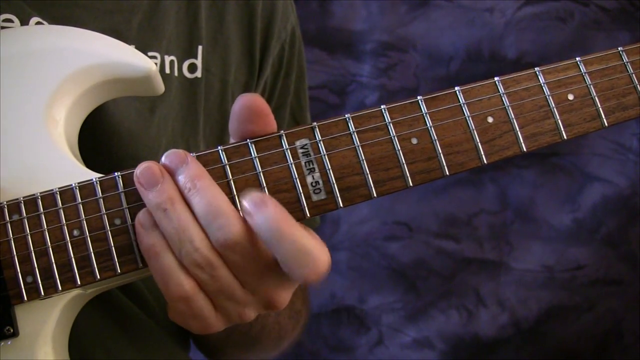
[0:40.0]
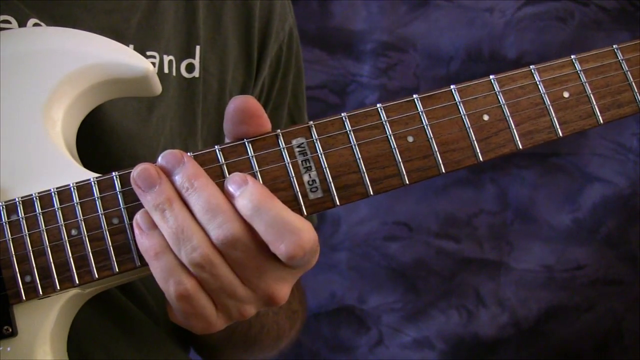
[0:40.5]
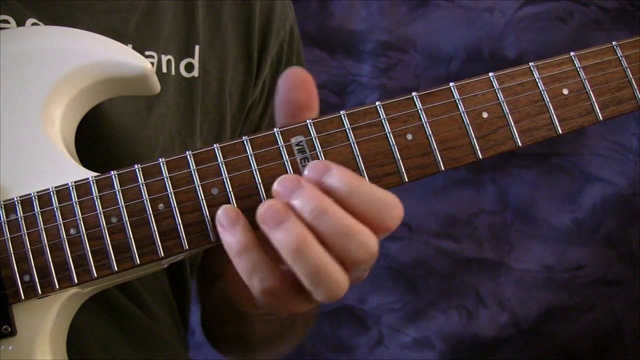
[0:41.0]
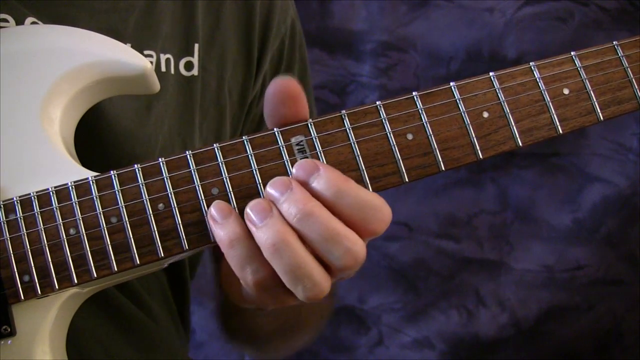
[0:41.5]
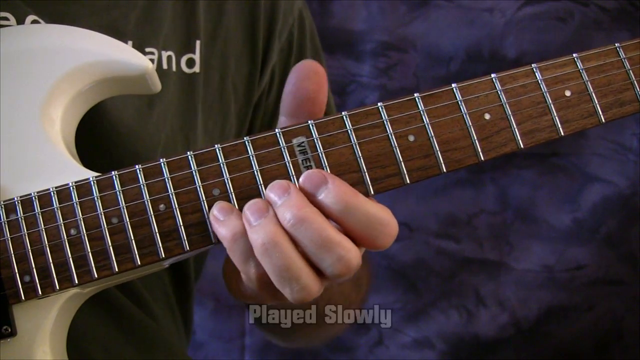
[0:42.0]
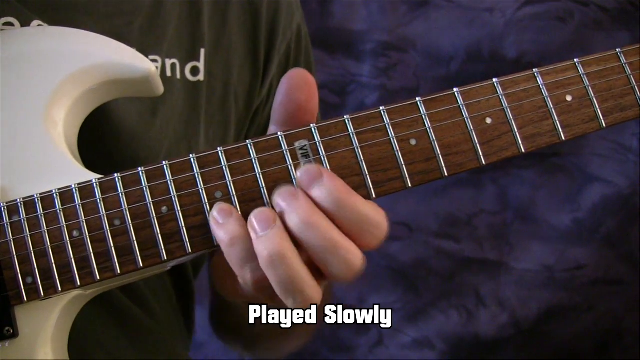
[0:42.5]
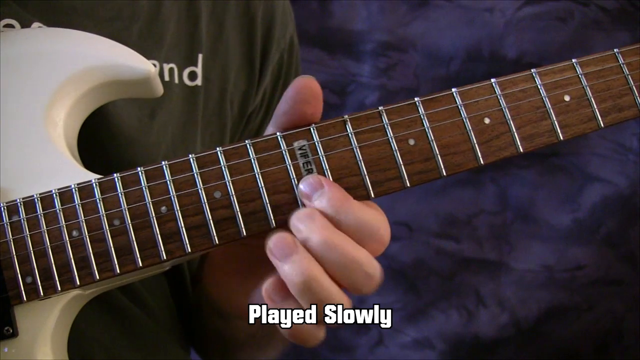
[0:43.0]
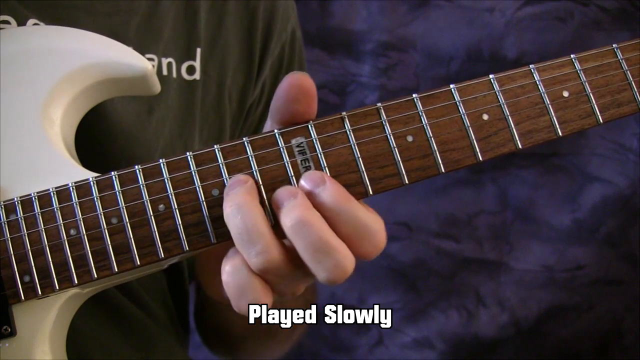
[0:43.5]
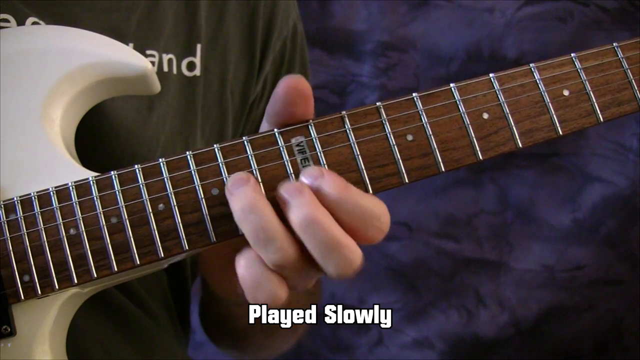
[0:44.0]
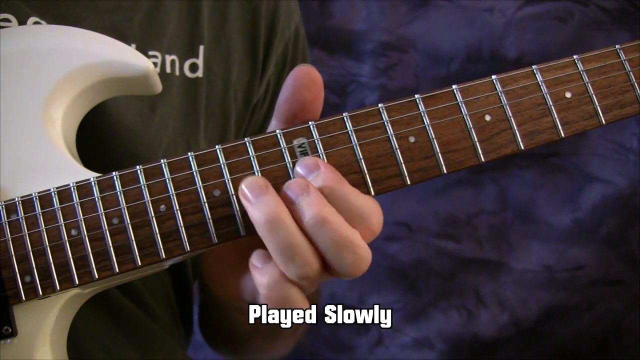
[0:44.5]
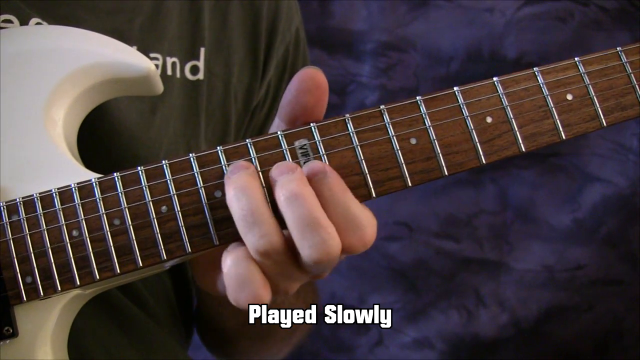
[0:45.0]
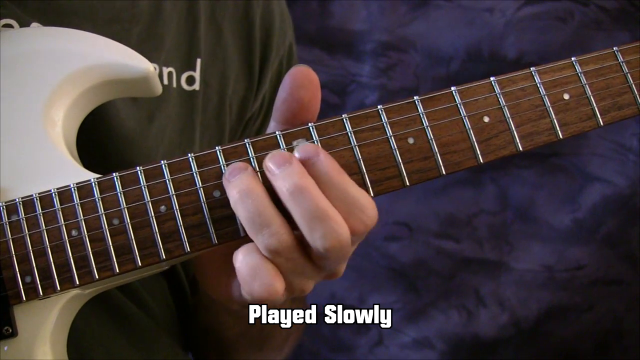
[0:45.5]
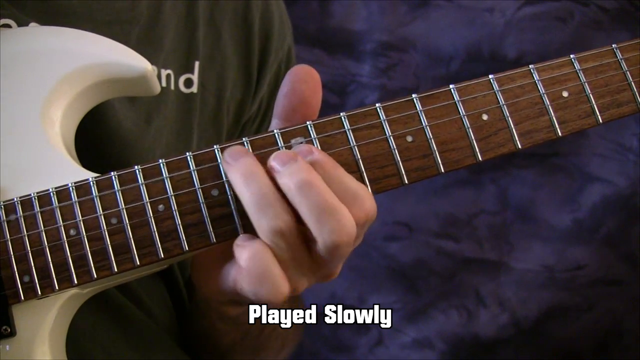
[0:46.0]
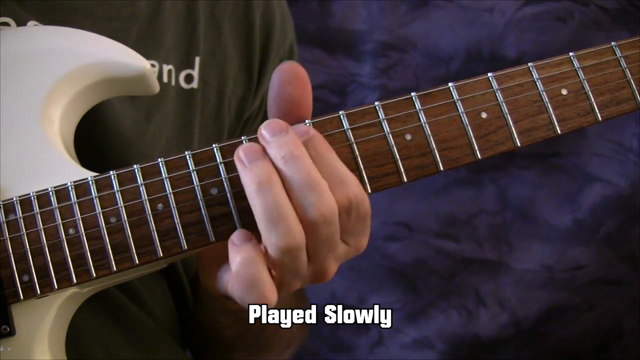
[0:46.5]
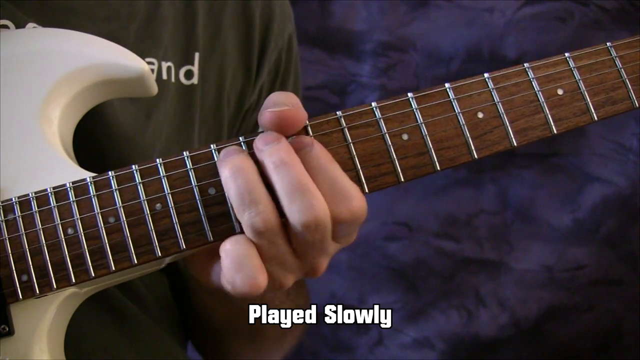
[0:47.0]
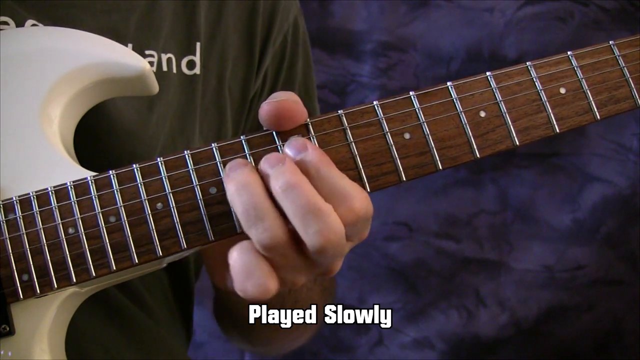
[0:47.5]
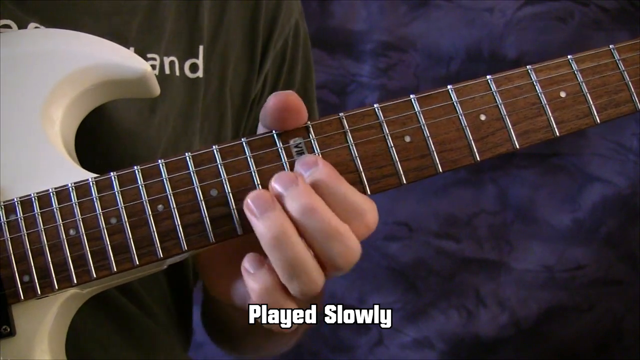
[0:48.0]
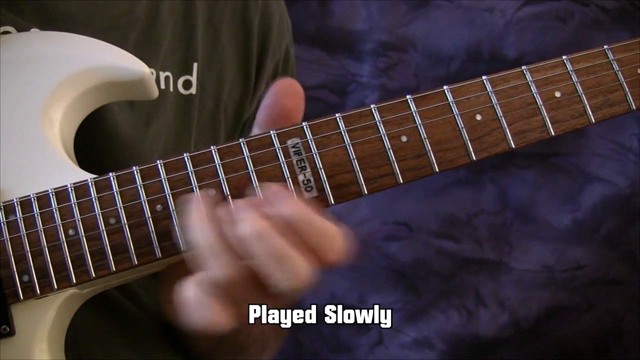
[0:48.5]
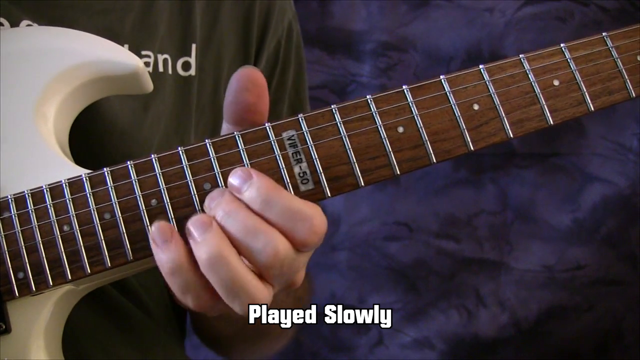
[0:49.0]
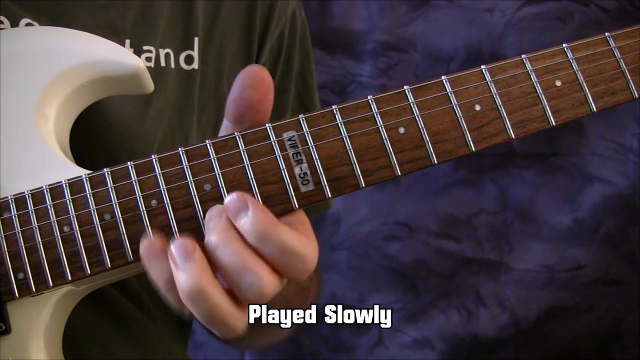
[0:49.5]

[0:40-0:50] The same person, possibly male or female, holds the guitar with the left hand at the top part where the strings are; the white body of the guitar cannot really be seen. The person wears a forest green shirt with white lettering, in front of a purple and dark purple mesh background. Text on the video says "playing slowly," and the left hand moves up and down the strings slightly and more slowly. Three fingers, the pointer, index and middle, do most of the work, while the pinky and thumb pop in. There is a very large gap between the person's hand and the very top of the guitar, so the person is playing lower on the guitar.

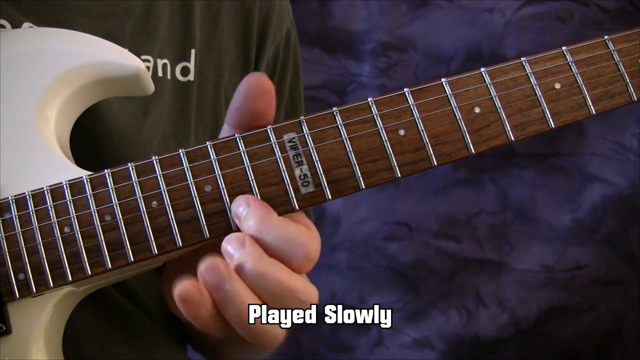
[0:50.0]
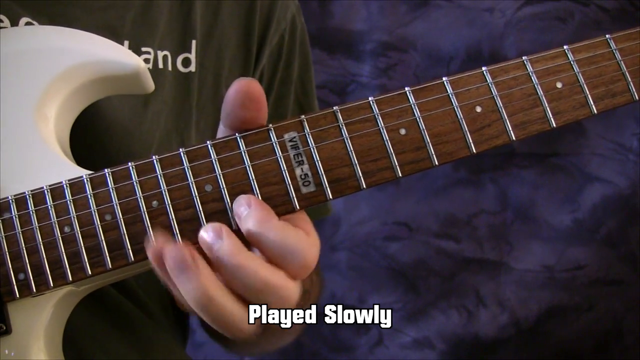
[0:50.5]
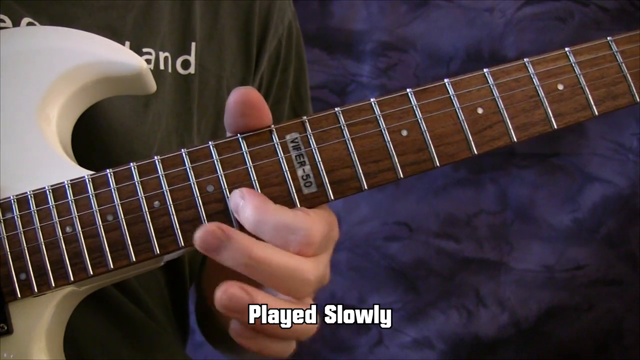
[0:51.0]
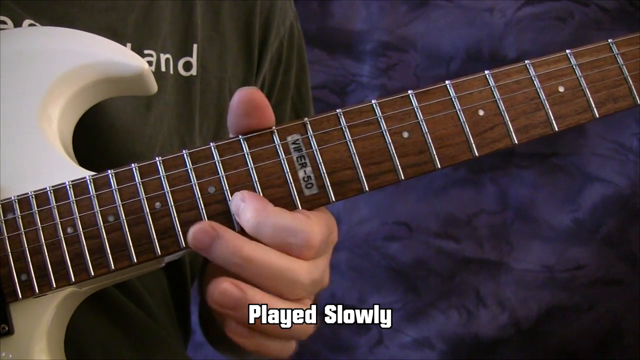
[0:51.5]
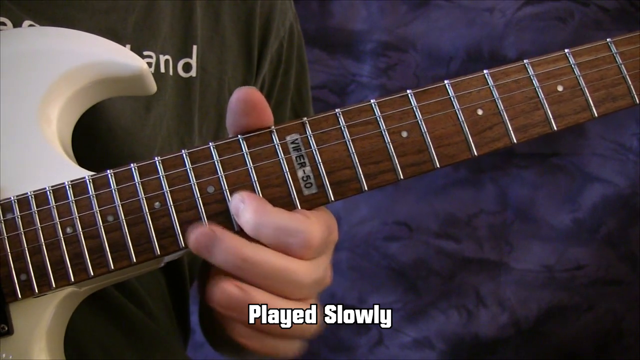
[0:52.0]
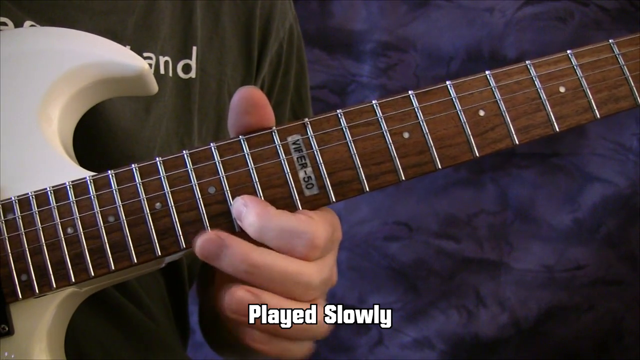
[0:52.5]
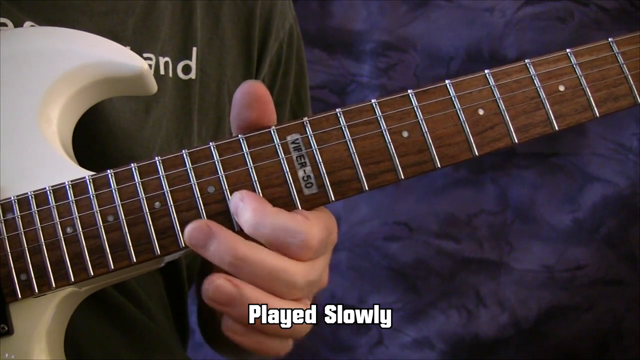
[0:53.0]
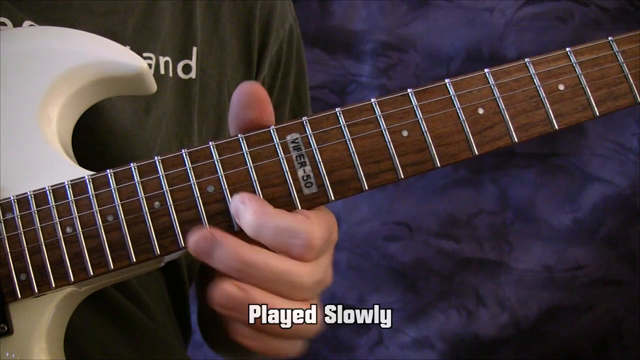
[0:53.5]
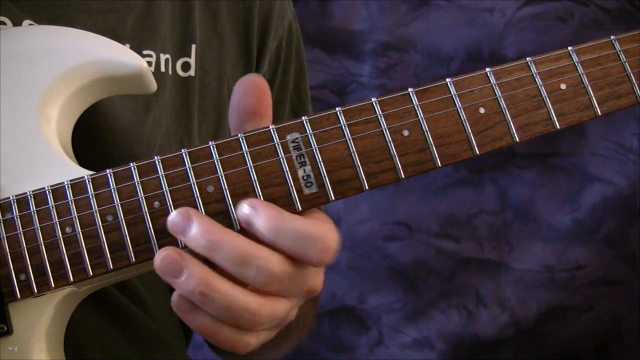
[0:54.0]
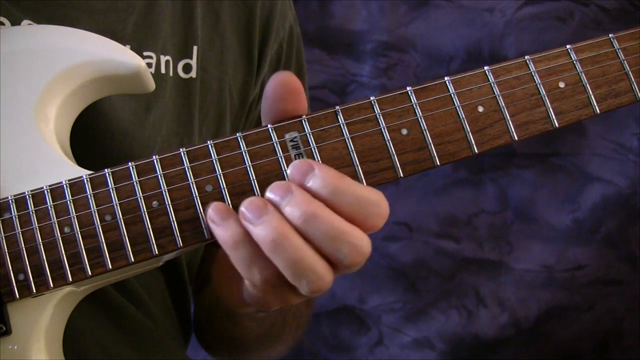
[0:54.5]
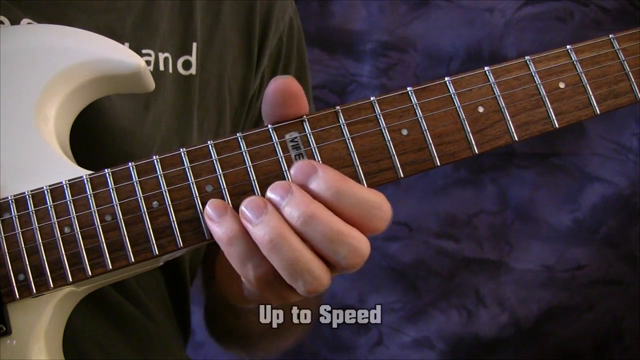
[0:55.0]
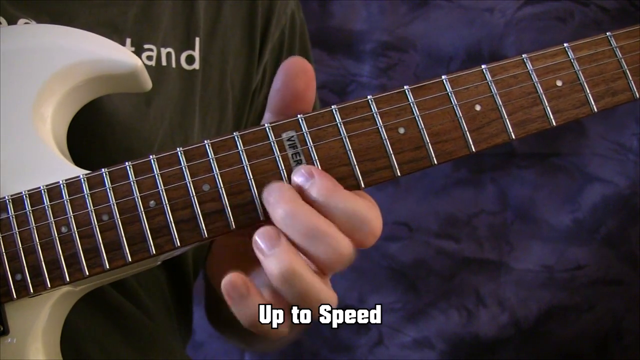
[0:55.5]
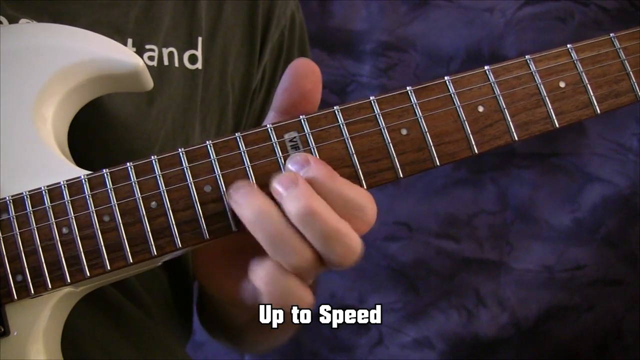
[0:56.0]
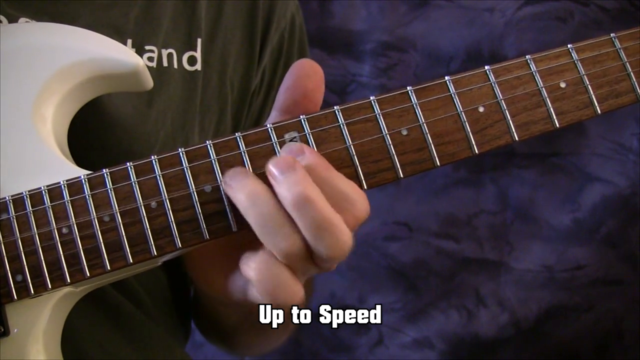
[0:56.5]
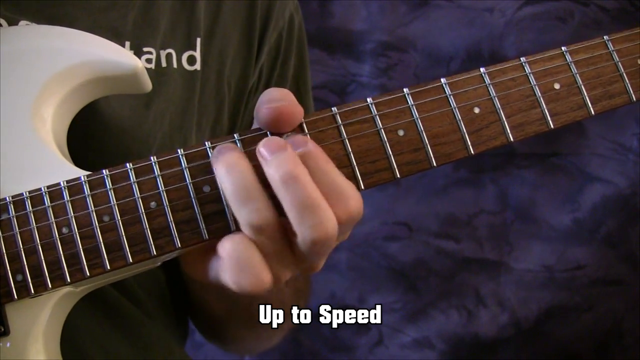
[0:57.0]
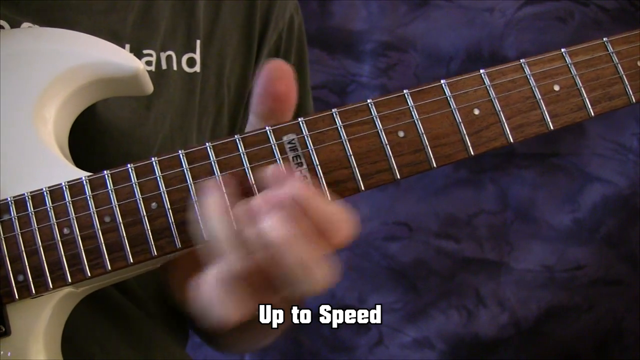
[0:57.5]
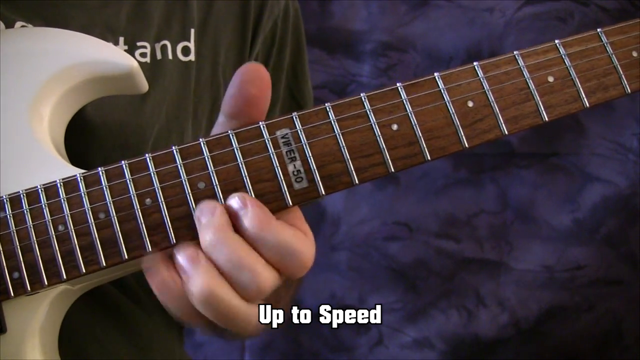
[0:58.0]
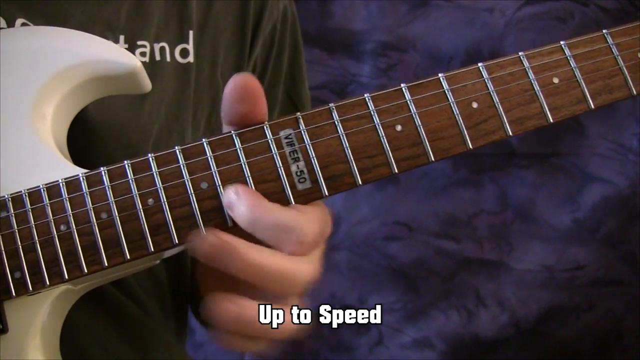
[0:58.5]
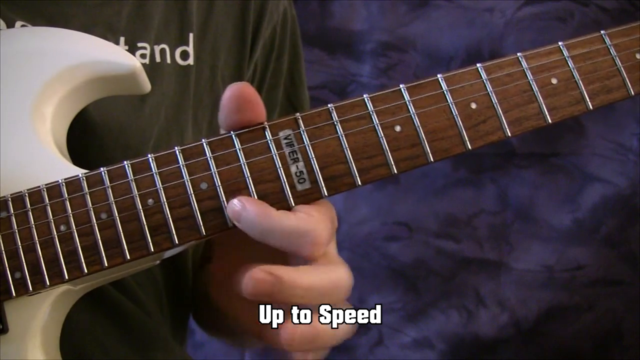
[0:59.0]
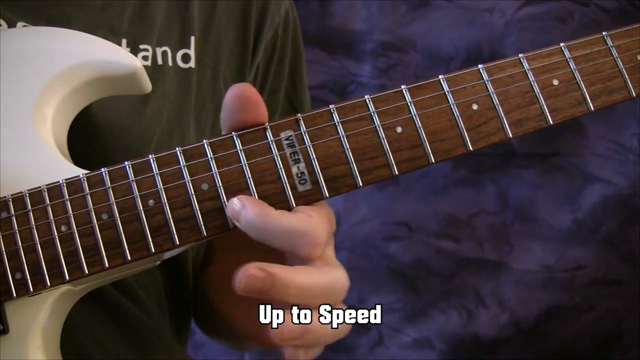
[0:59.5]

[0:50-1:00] The same person, possibly male or female, in a forest green shirt with white lettering, plays the guitar in front of a purple and dark purple mesh background. Only a very small portion of the white guitar body is visible, while all of the strings and the top of the guitar can be seen. The left hand is closer to the body of the guitar than to the top. The person plays slowly, then the fingers move noticeably quicker as the playing comes up to speed, and text at the bottom of the screen says "up to tempo."